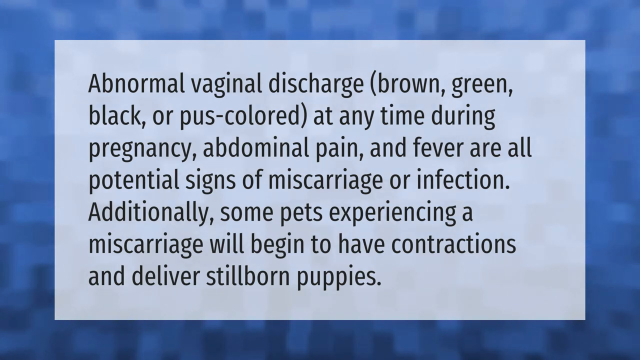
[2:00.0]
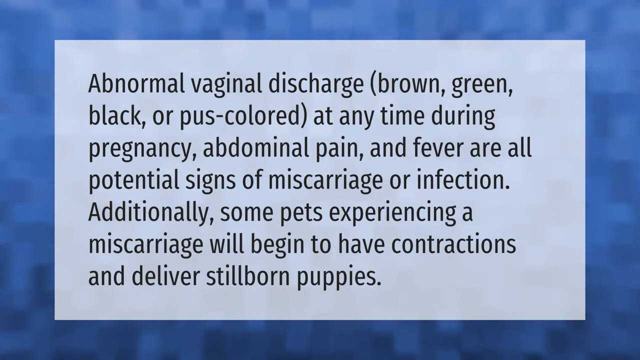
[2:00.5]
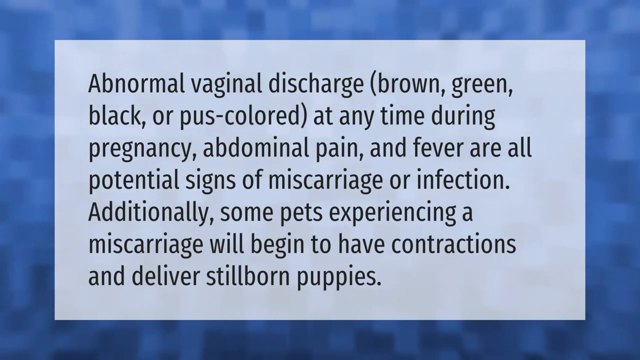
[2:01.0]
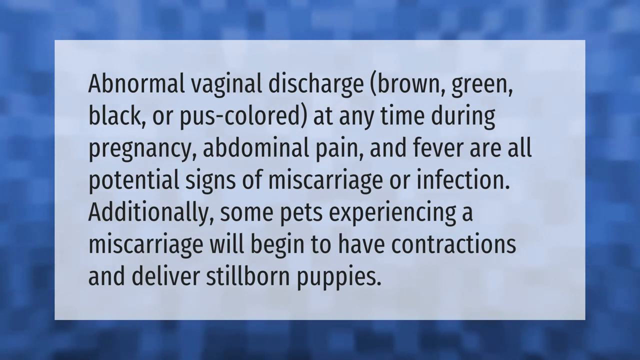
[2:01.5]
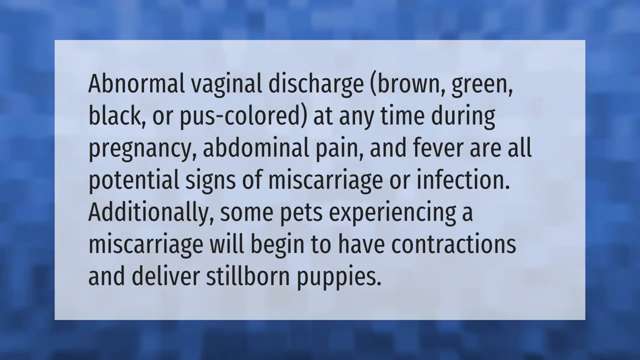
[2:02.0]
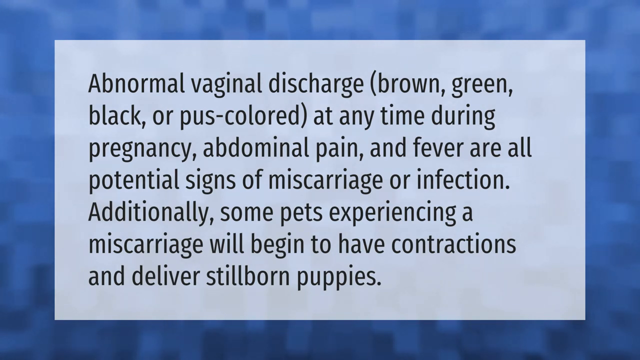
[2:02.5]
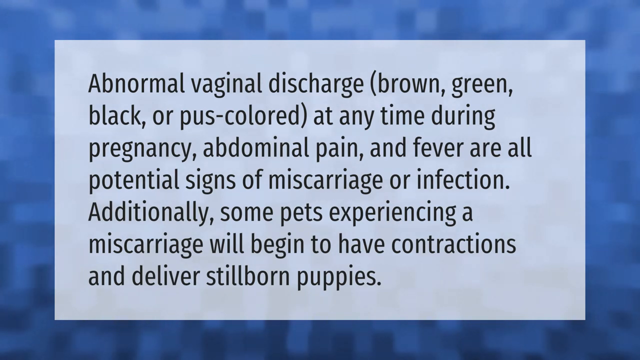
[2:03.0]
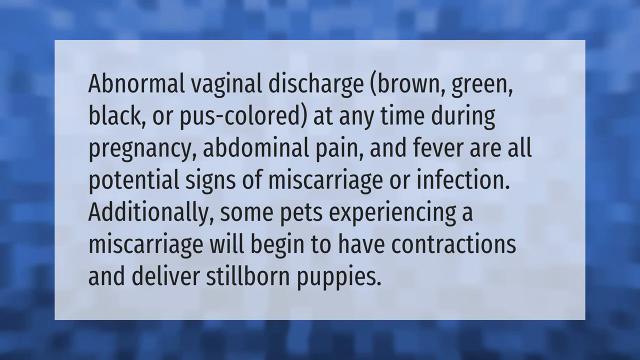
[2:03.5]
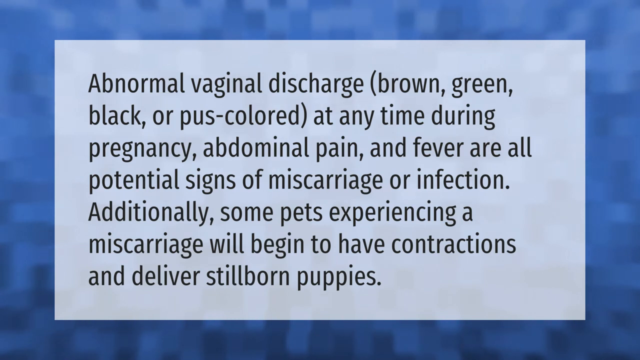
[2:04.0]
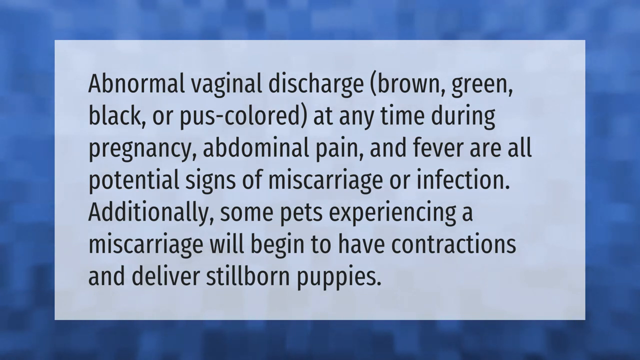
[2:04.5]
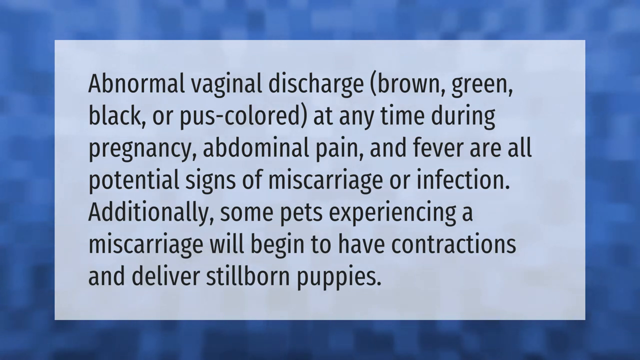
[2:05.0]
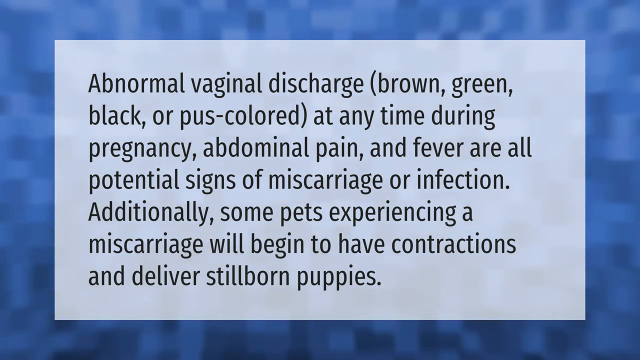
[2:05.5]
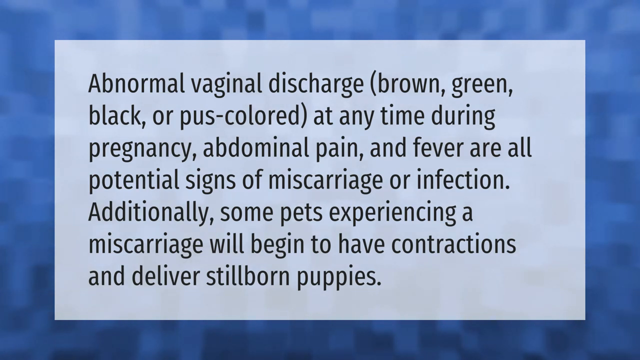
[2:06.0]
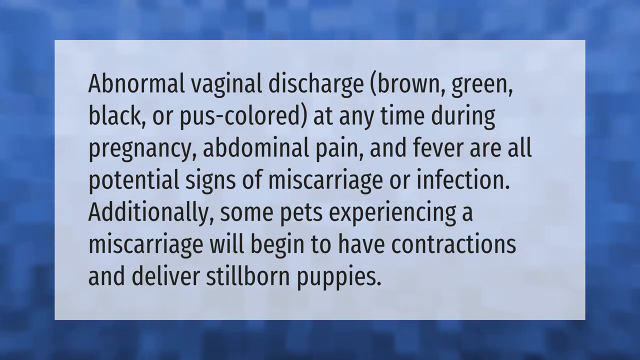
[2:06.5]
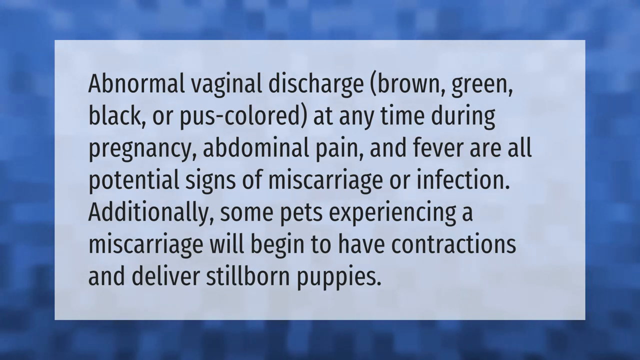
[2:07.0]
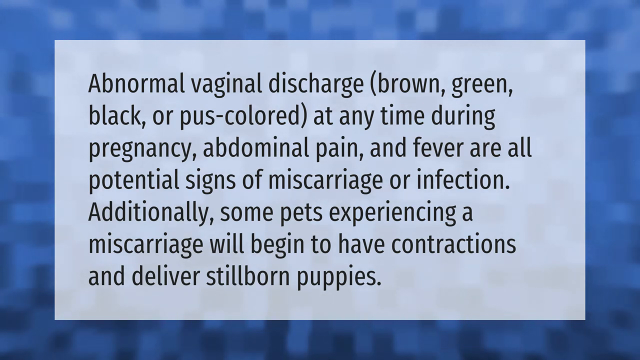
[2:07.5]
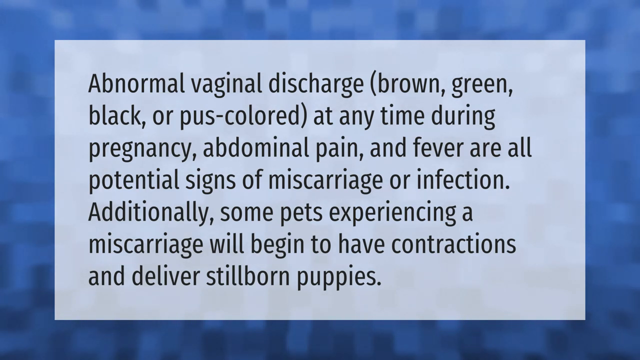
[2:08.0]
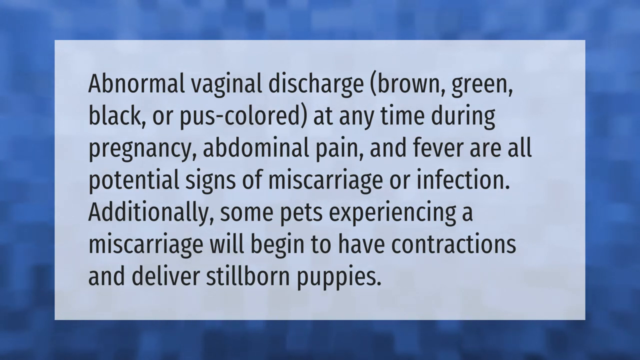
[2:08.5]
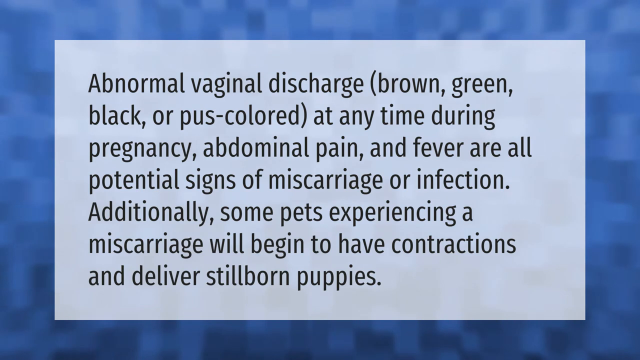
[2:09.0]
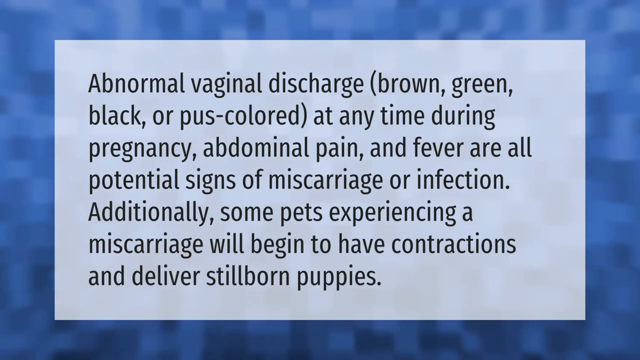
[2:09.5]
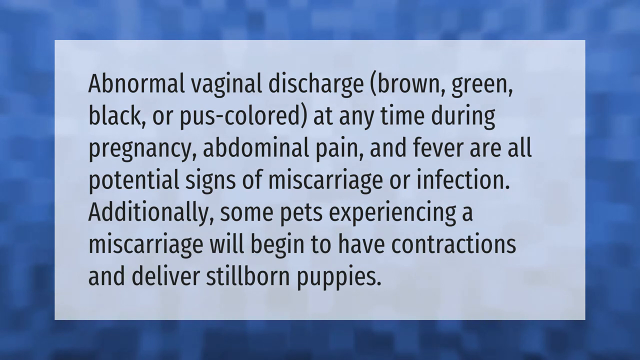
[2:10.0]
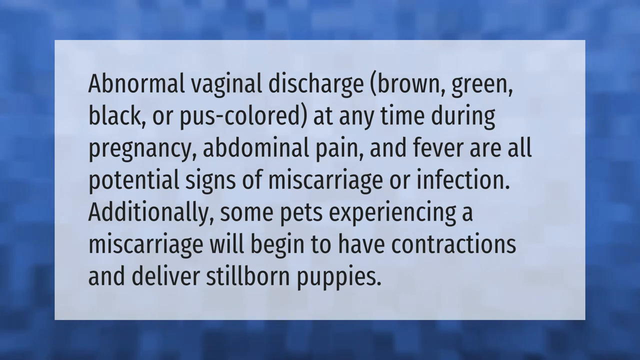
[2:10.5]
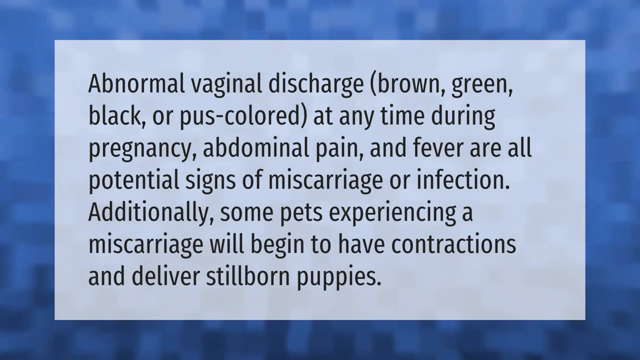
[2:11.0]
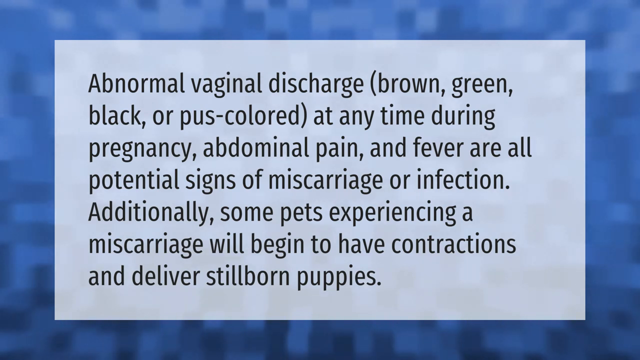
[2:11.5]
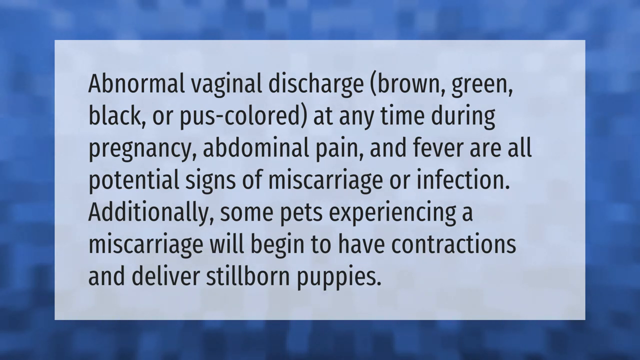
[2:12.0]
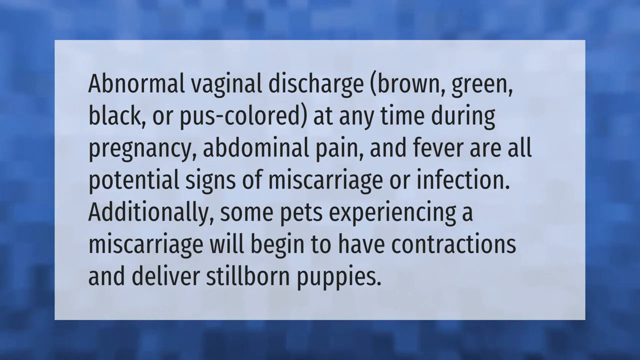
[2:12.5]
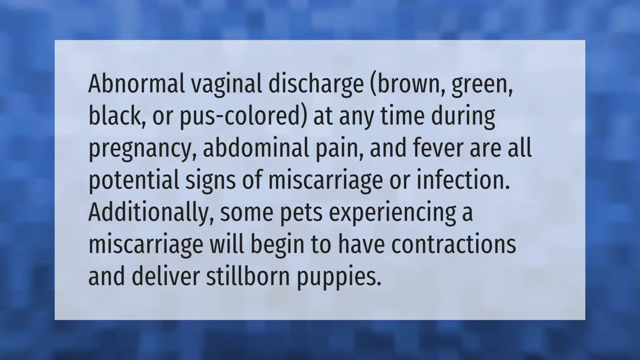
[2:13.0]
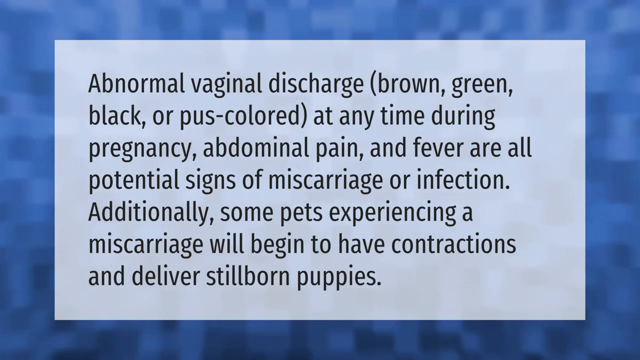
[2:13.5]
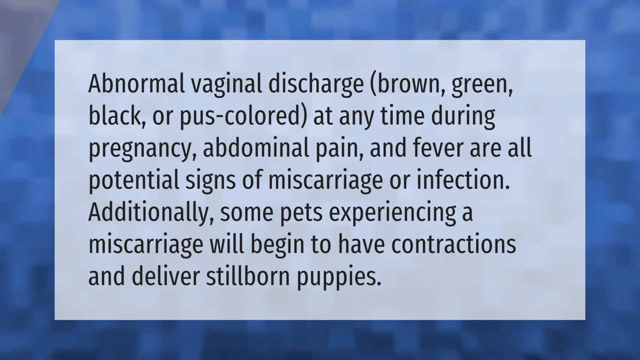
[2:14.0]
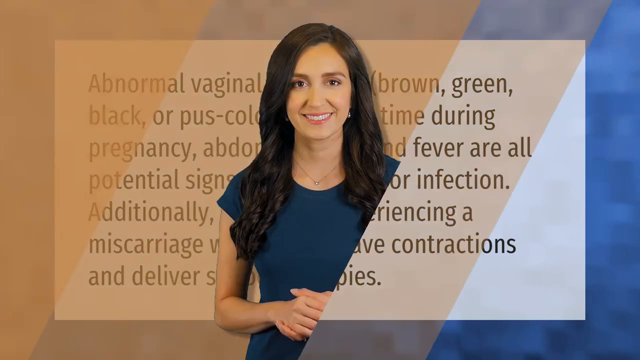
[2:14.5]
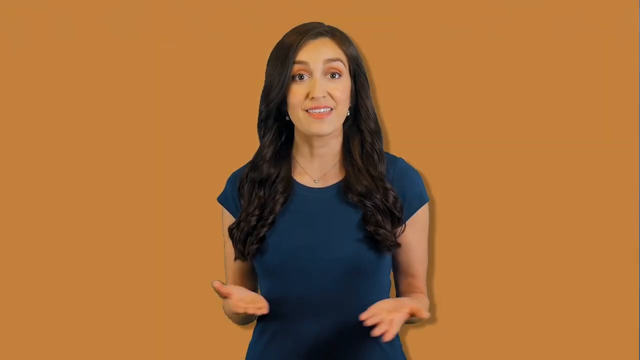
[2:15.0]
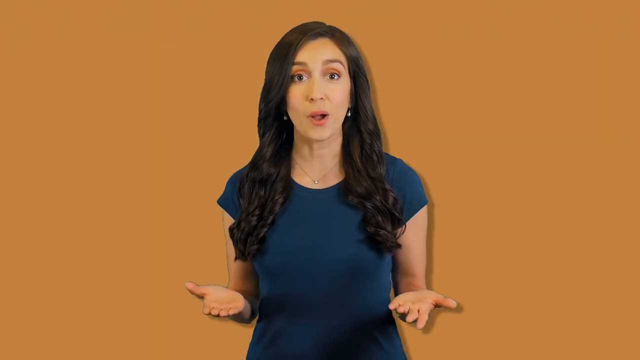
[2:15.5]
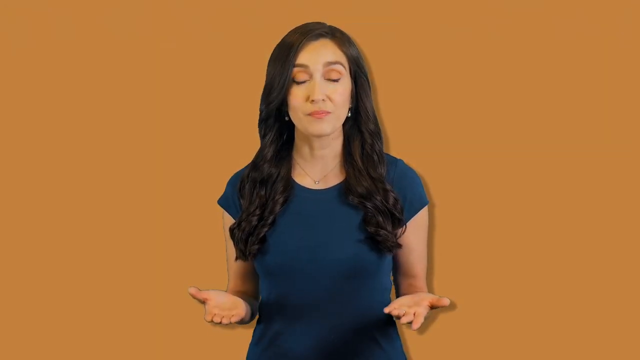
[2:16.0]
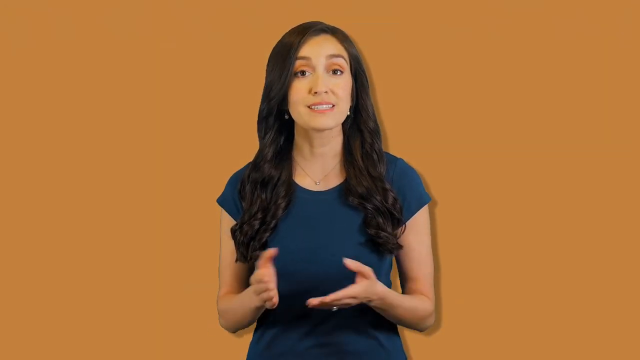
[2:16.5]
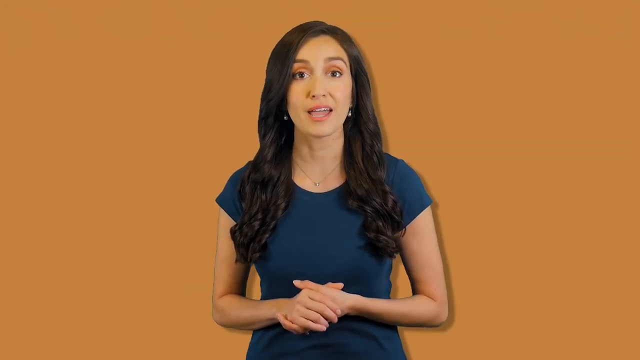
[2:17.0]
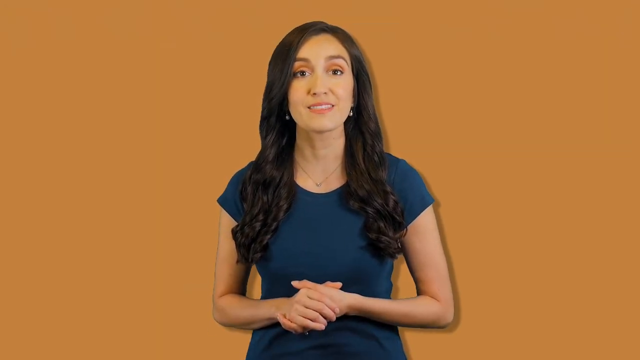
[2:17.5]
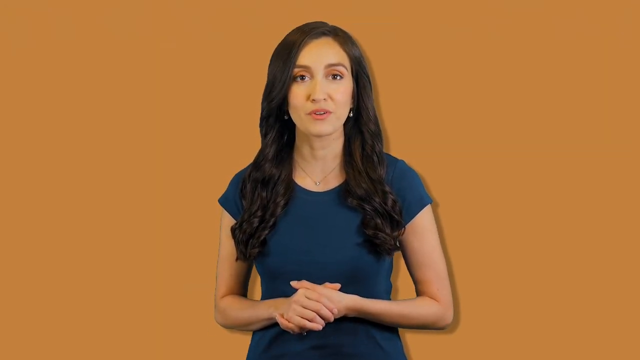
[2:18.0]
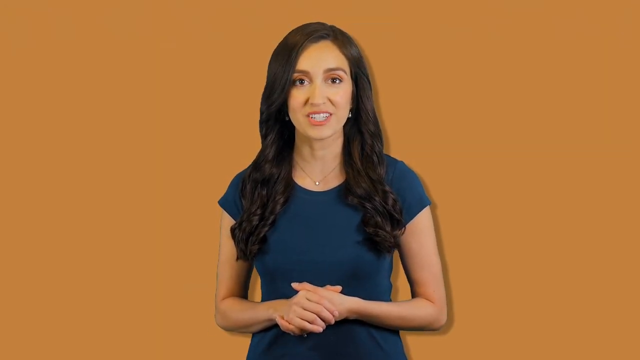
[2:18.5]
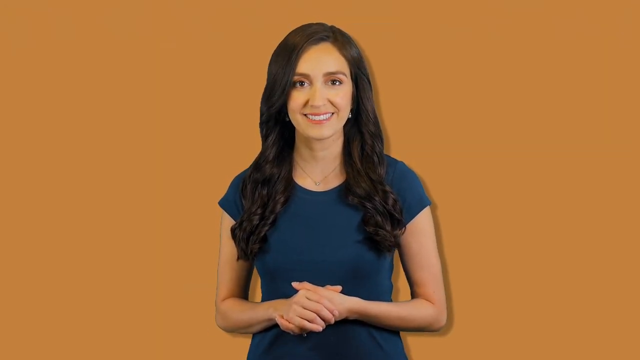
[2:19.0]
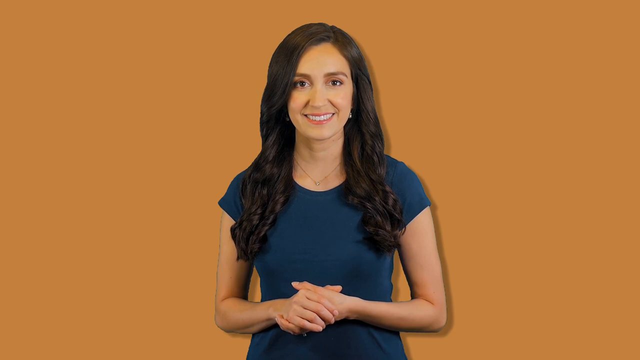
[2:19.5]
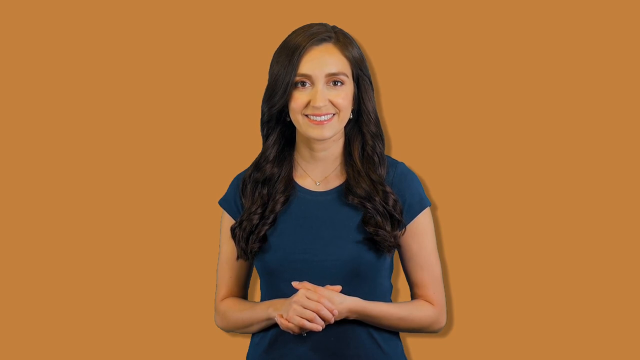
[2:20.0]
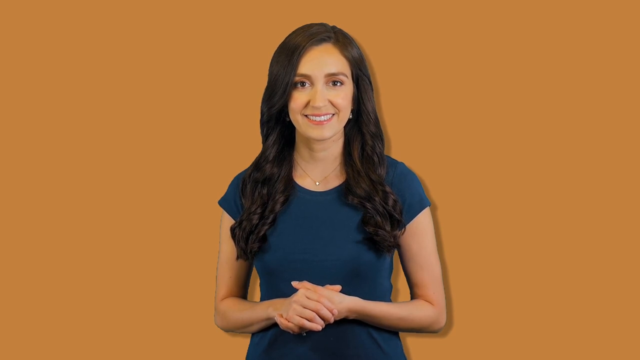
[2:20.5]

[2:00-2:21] The dark blue screen with darker-colored squares and a light white or light blue rectangle in the middle reads "abnormal vaginal discharge, brown, green, black" and "at any time during pregnancy. Abnormal pain and fever are all potential signs of miscarriage or infection. Additionally, some pets experiencing a miscarriage will begin to have contractions and deliver stillborn puppies." It then changes to a dark burnt orange screen where the woman with dark hair in the dark blue shirt comes on and starts talking. She wears a necklace and is smiling, and the video ends.